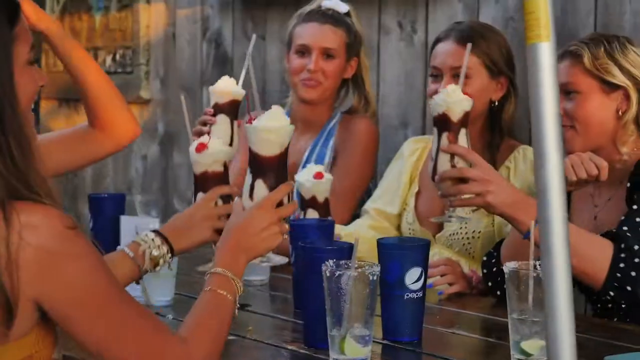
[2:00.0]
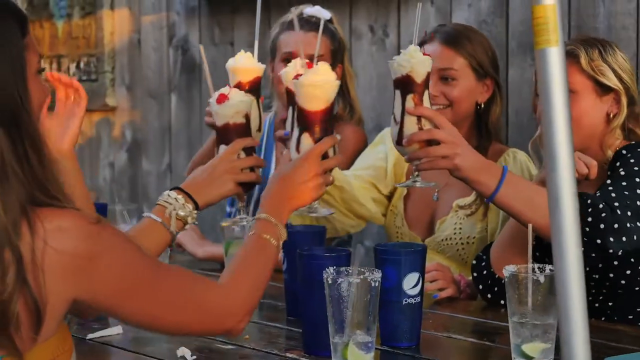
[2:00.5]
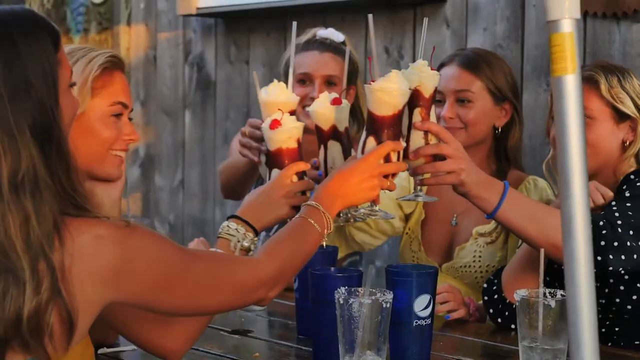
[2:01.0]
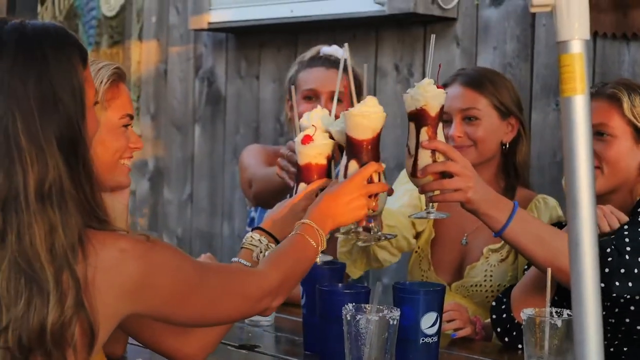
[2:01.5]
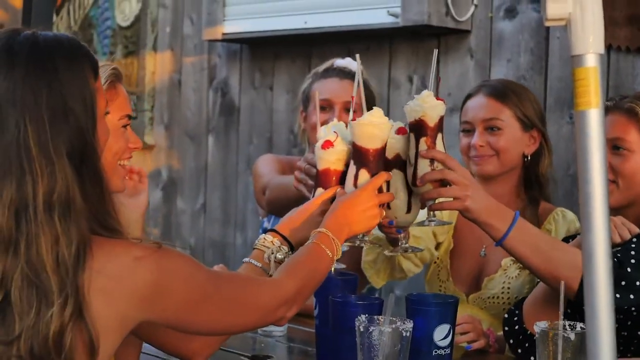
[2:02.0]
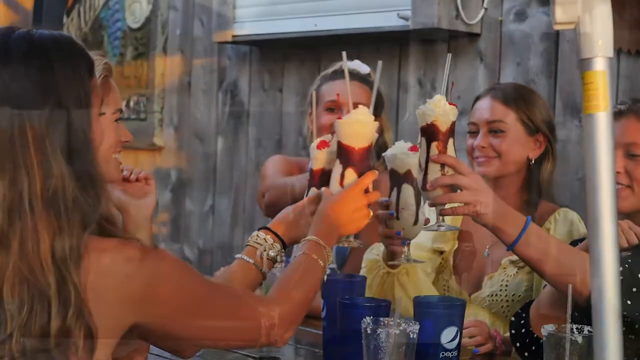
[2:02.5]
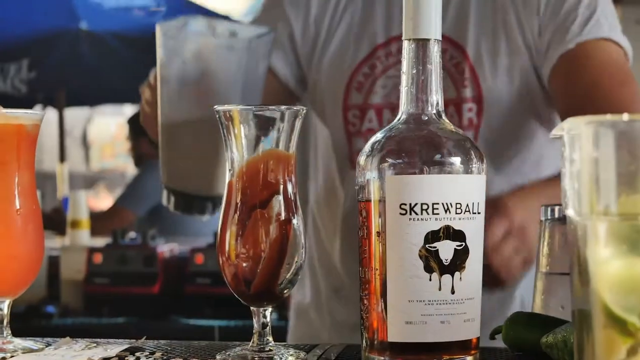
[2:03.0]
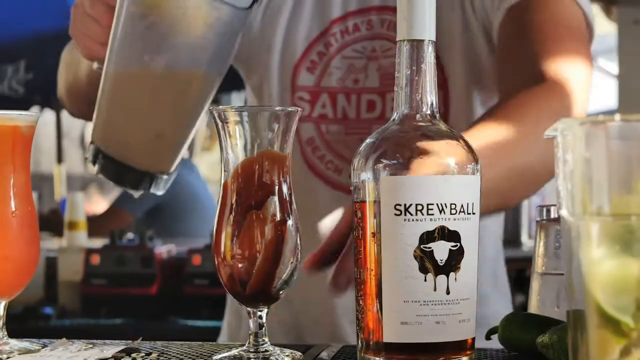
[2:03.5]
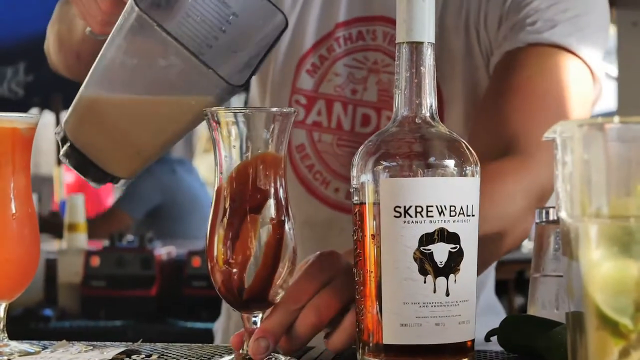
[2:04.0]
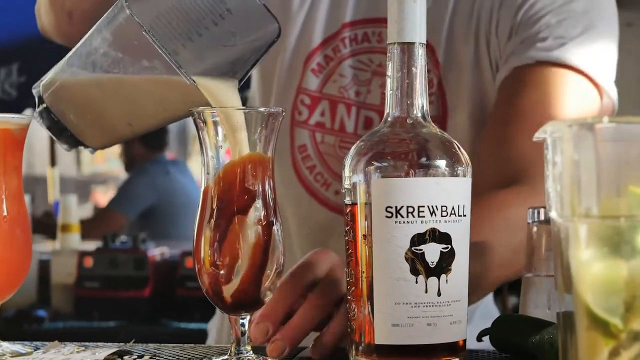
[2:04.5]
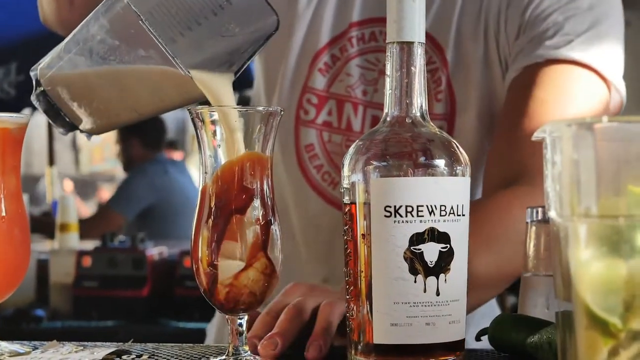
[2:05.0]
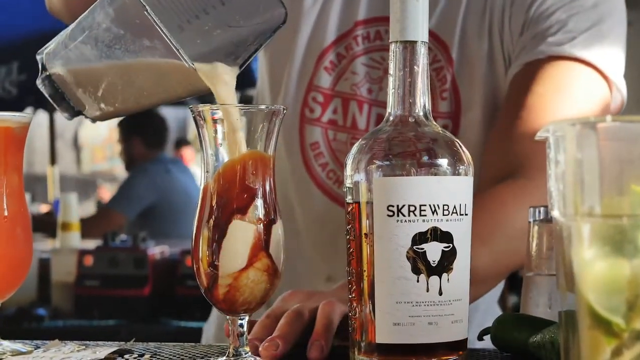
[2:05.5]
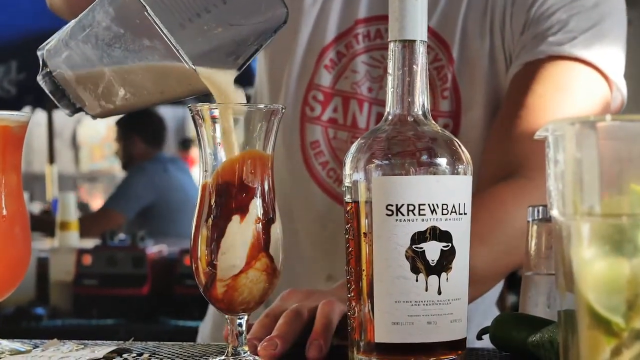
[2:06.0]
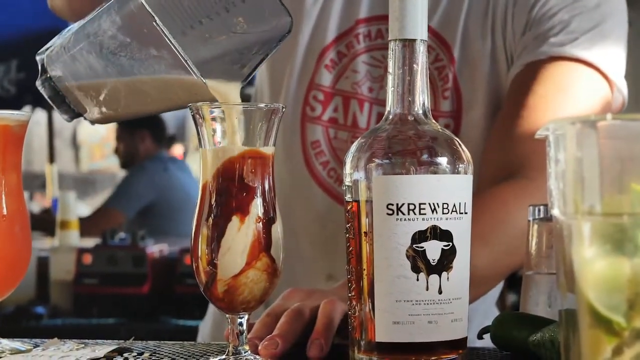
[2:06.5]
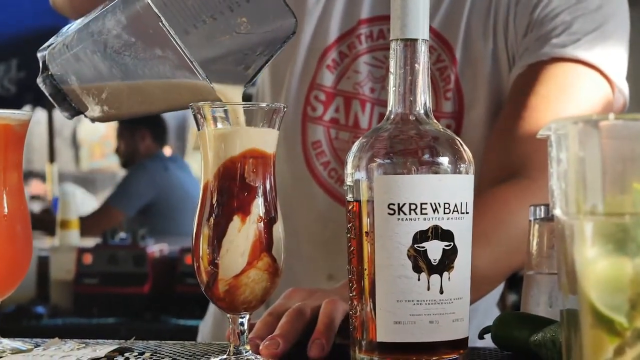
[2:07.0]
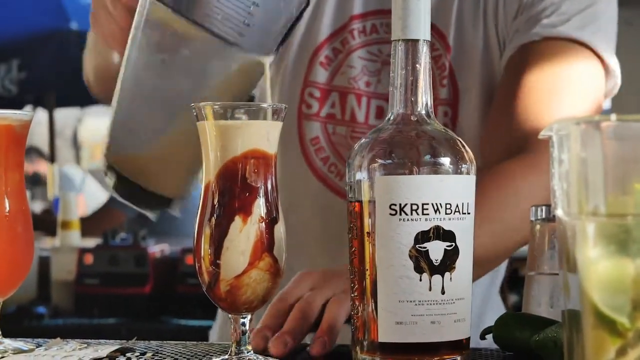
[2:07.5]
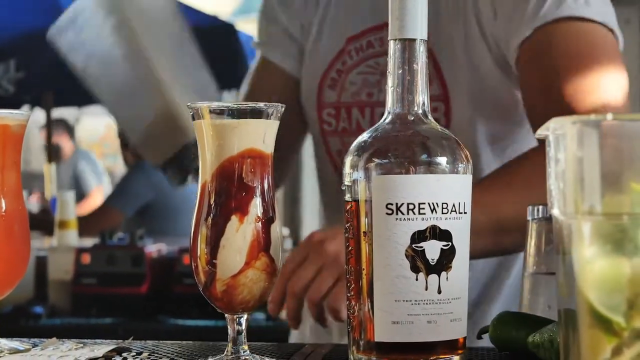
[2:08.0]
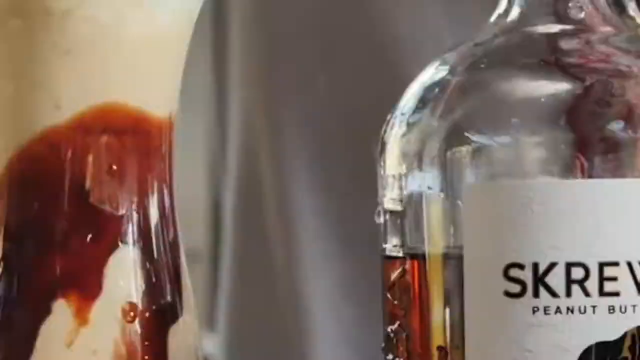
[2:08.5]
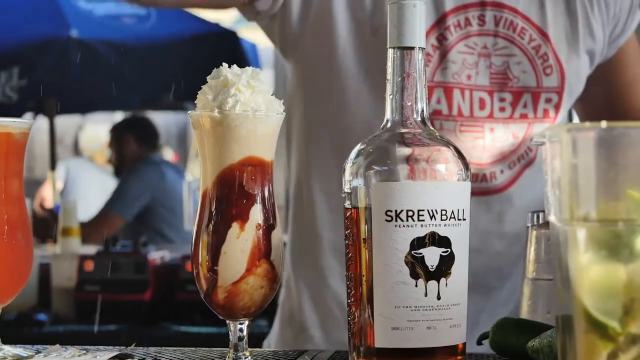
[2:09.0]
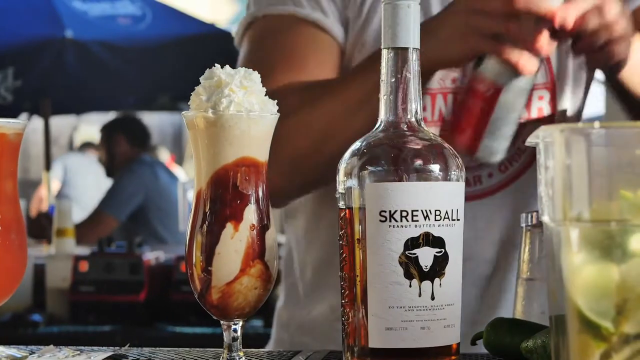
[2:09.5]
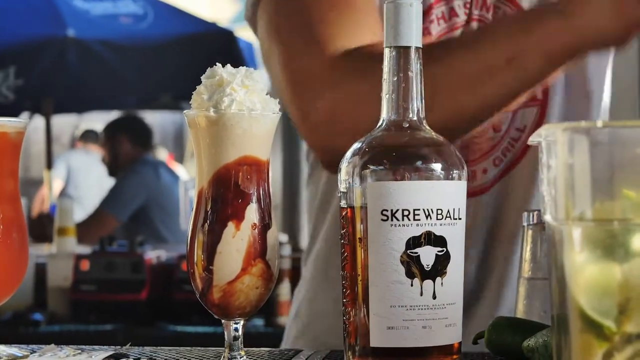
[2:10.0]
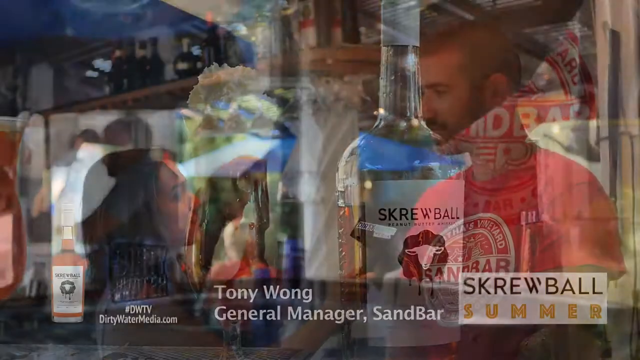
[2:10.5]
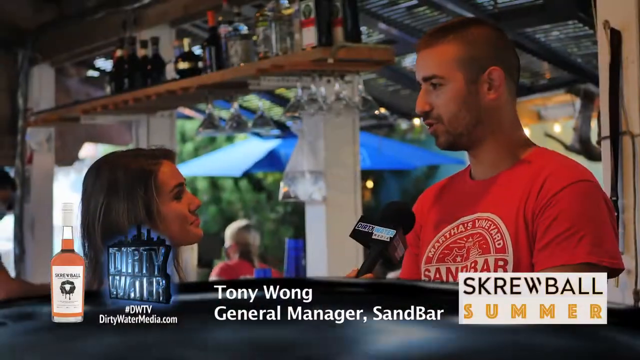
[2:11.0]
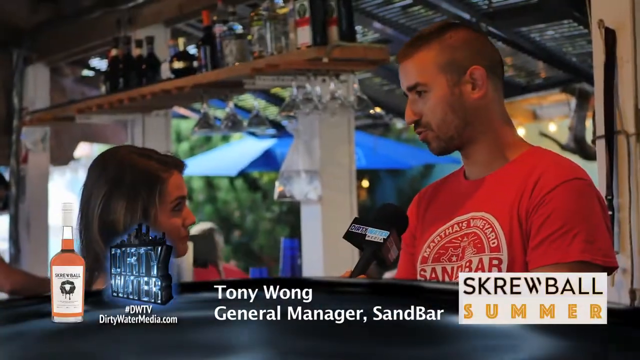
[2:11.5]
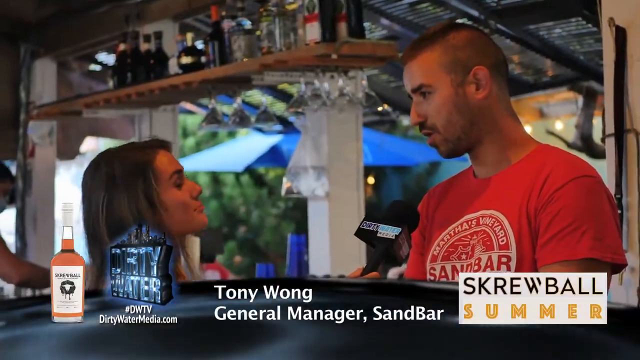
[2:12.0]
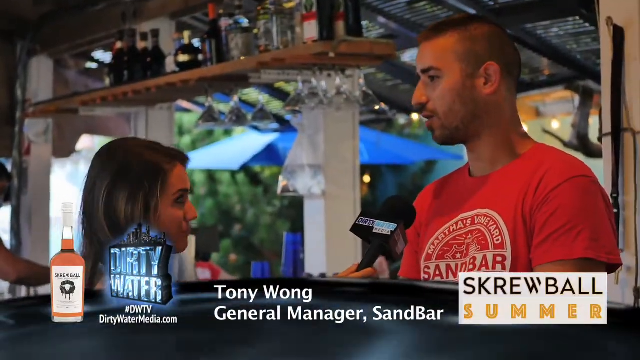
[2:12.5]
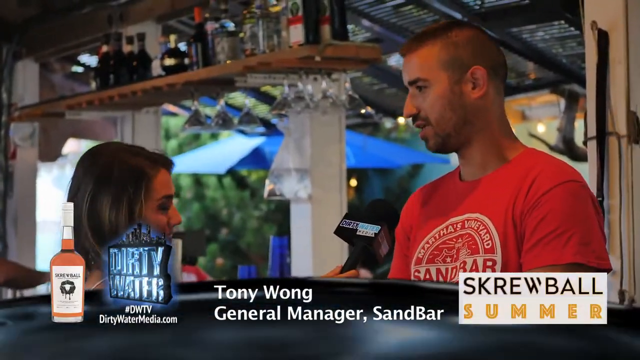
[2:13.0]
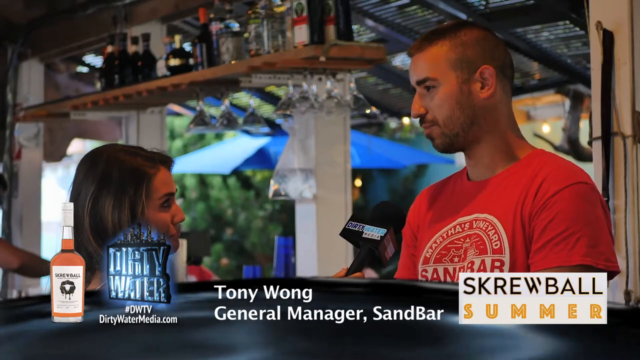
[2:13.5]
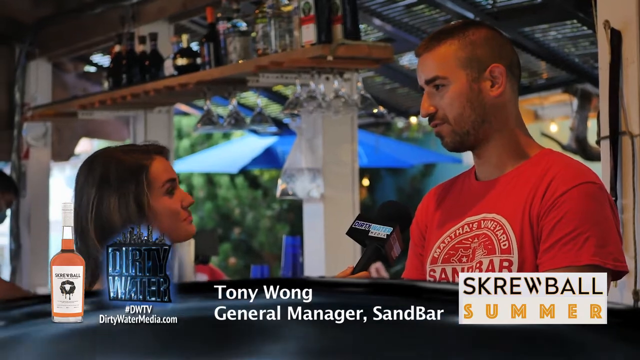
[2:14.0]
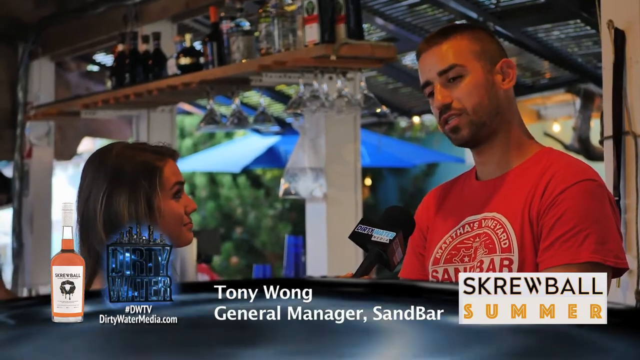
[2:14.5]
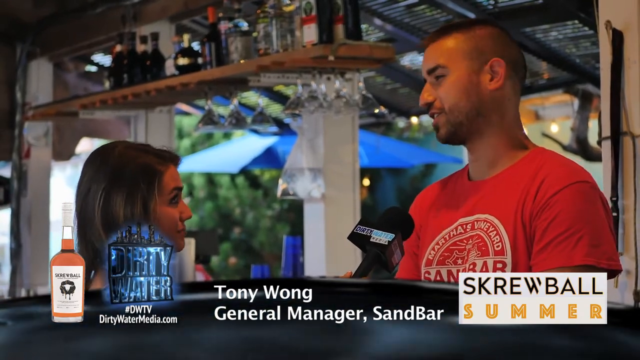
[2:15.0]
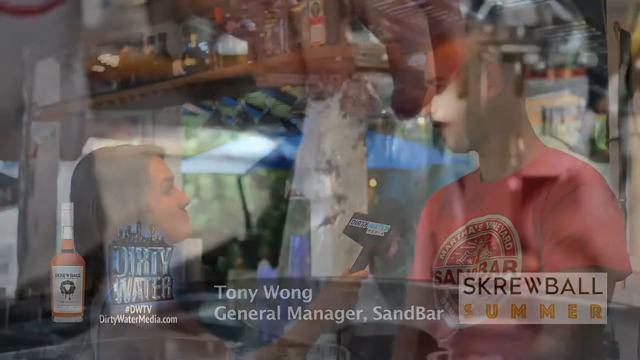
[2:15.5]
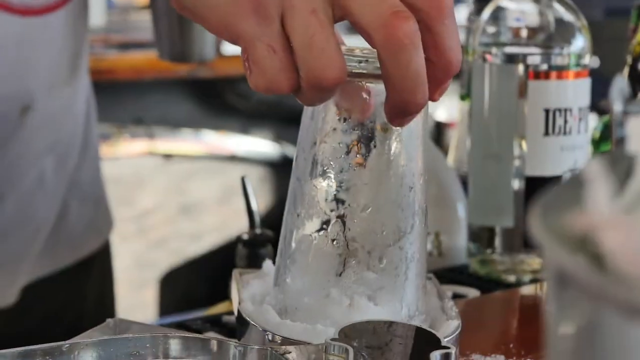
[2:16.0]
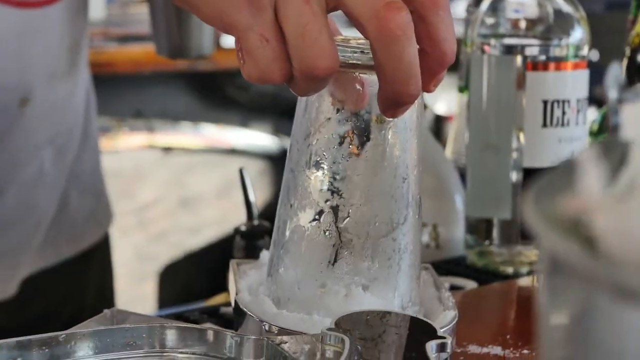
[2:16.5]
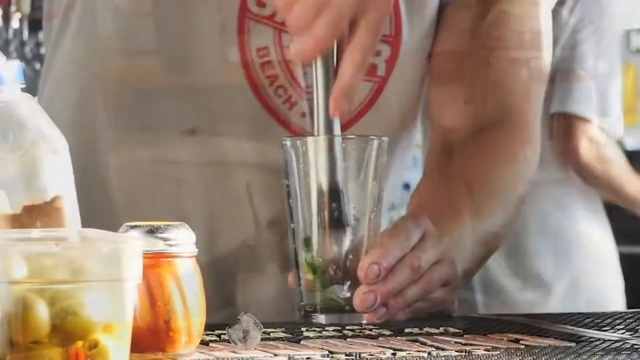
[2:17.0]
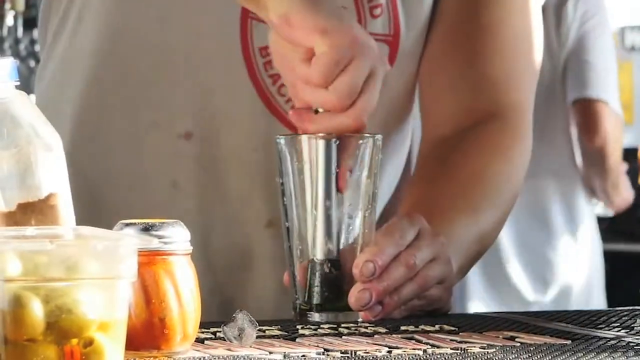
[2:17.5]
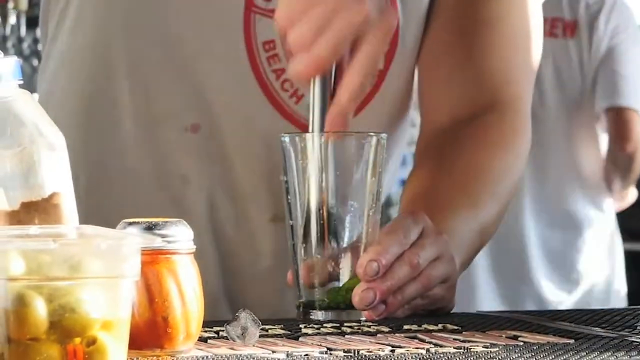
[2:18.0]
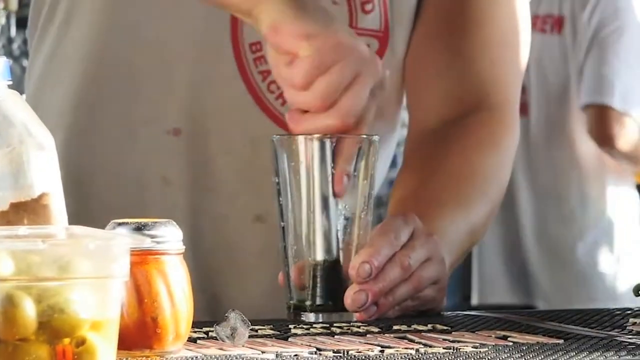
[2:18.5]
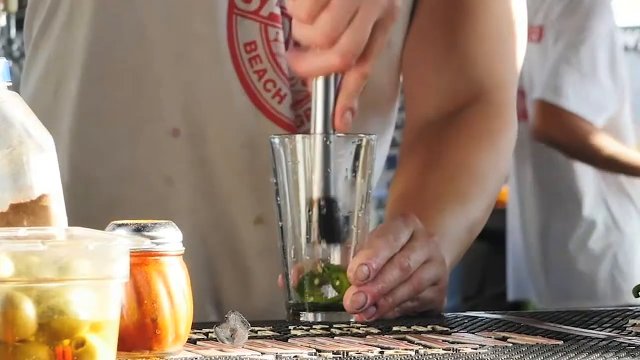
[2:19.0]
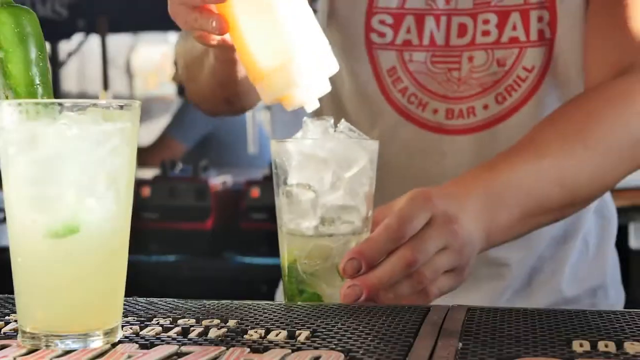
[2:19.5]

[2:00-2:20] Ladies have ice cream in tall glasses with straws and seem to be cheering each other and laughing. Next, a bartender tends the bar and seems to be serving ice cream in a tall glass with whipped cream on top; on the side there is a photo of "SKREWBALL." The scene cuts to the reporter, who seems to be interviewing a tall white man with a beard wearing a red t-shirt, named Tony Wong, the general manager of the Sandbar; he seems to be explaining something to the reporter. Then a bartender prepares a drink, crushing a lemon in a glass, adding ice cubes and pouring a drink.